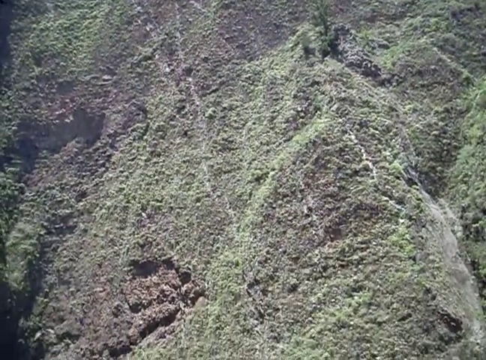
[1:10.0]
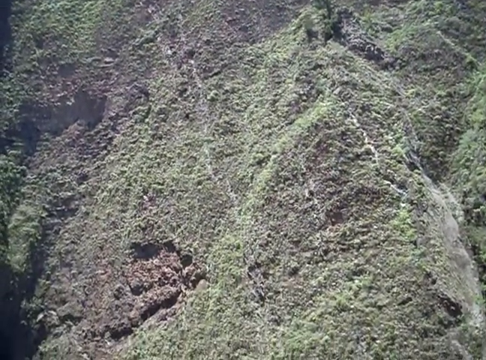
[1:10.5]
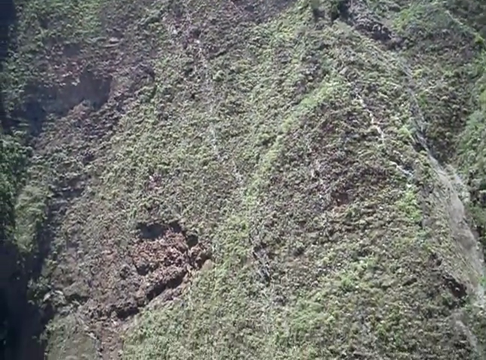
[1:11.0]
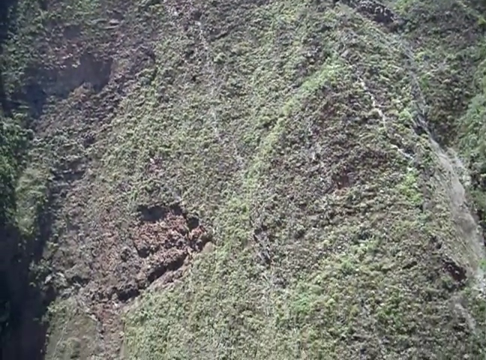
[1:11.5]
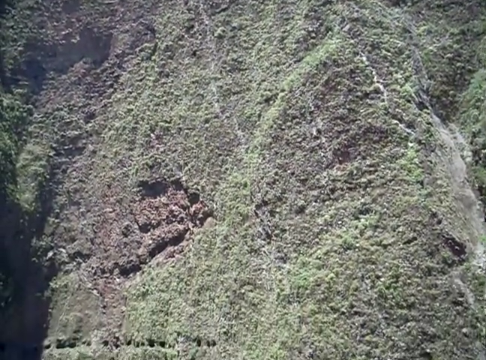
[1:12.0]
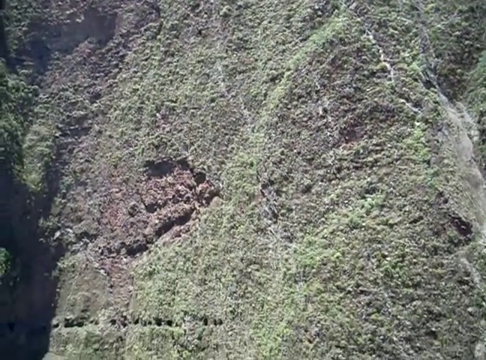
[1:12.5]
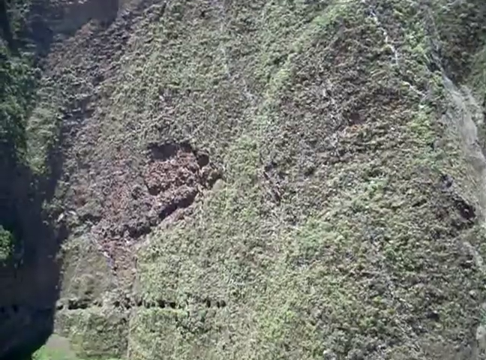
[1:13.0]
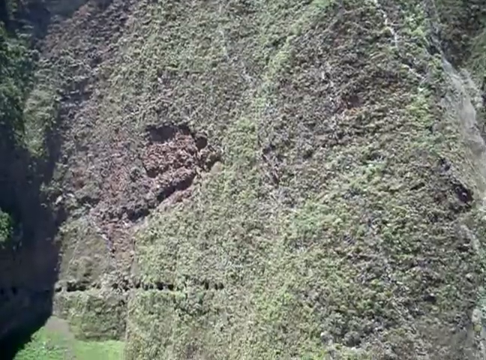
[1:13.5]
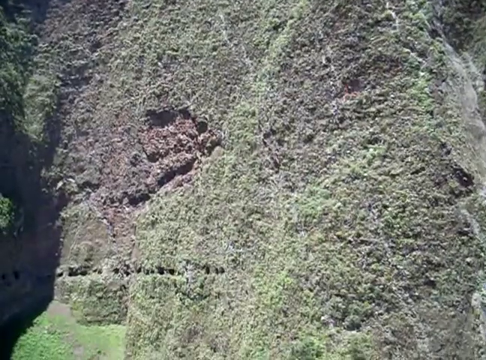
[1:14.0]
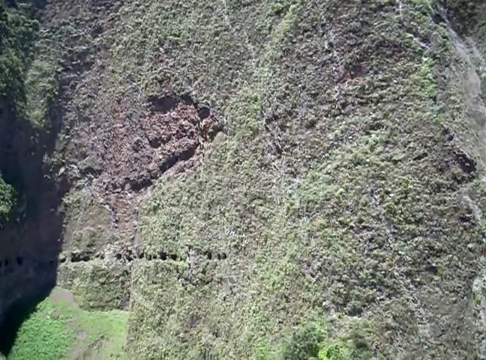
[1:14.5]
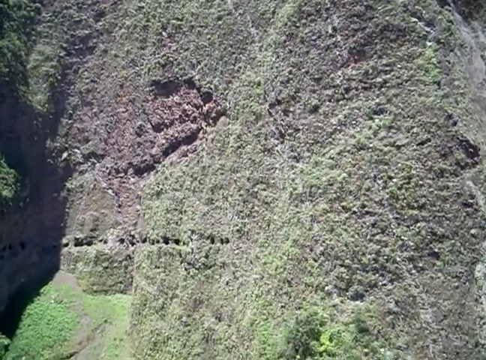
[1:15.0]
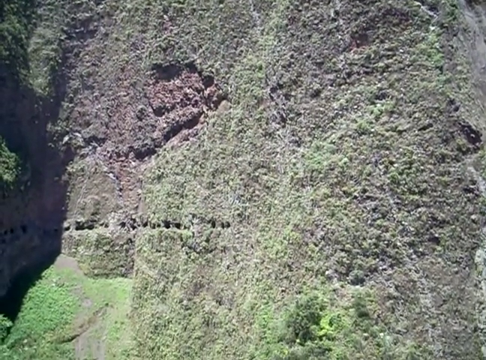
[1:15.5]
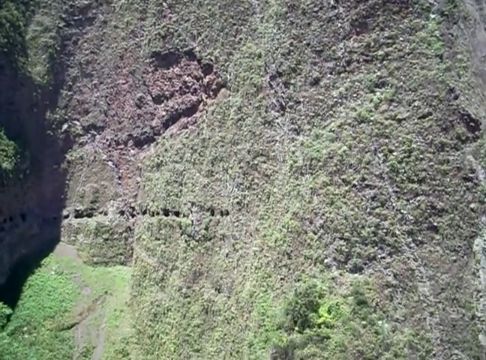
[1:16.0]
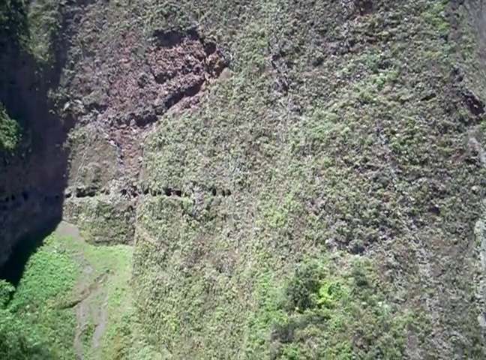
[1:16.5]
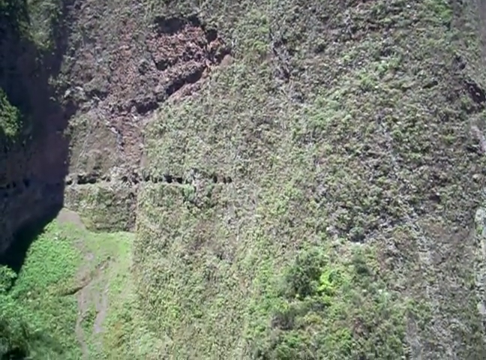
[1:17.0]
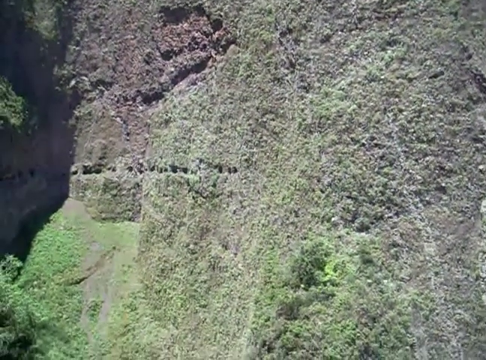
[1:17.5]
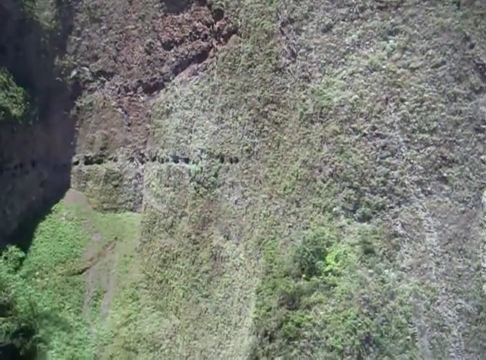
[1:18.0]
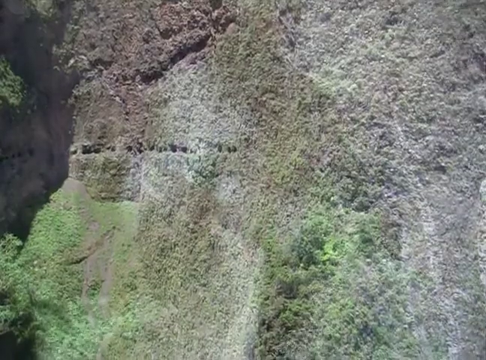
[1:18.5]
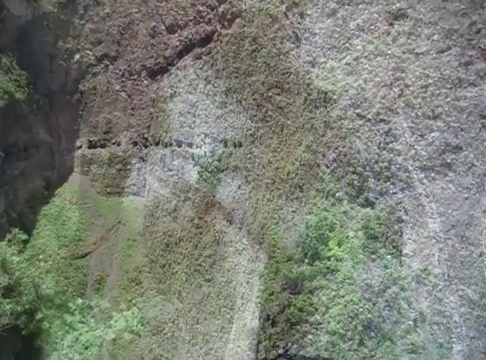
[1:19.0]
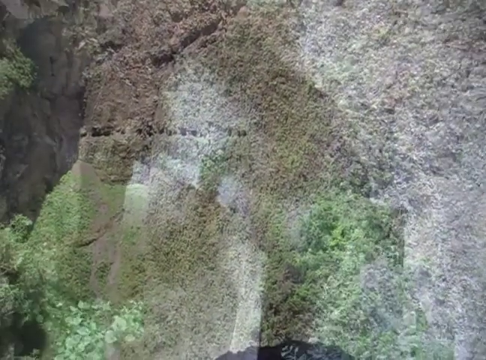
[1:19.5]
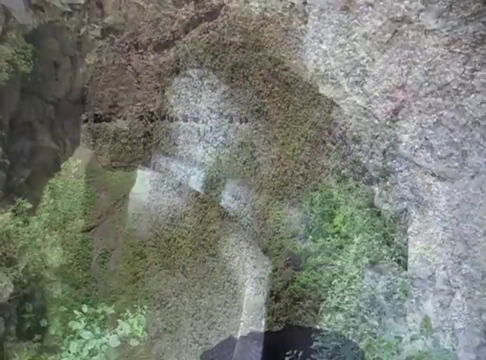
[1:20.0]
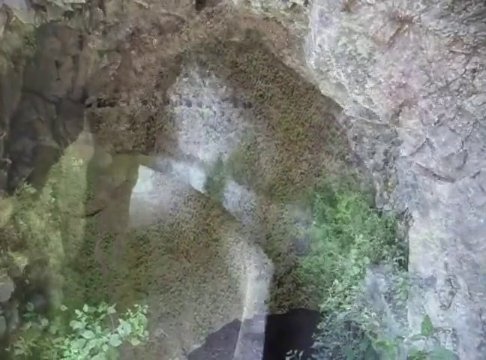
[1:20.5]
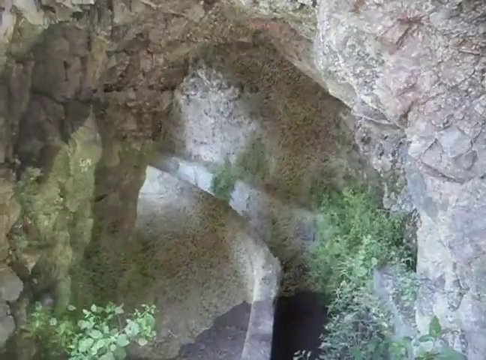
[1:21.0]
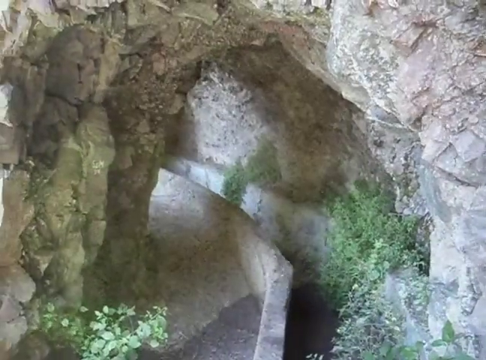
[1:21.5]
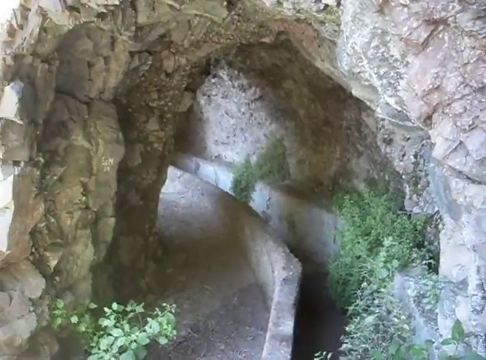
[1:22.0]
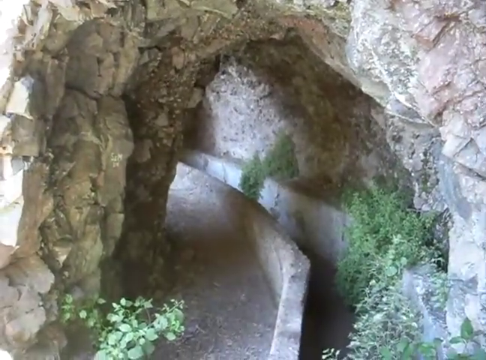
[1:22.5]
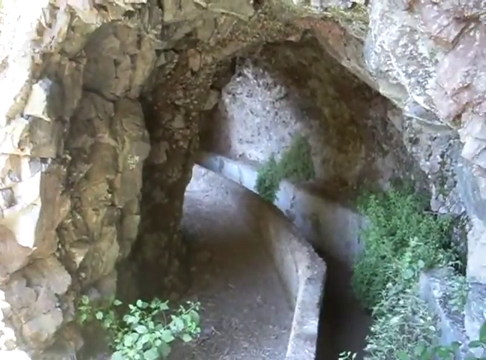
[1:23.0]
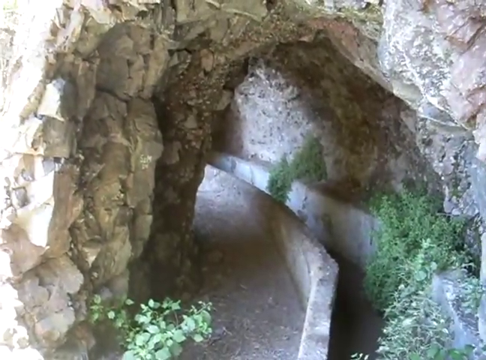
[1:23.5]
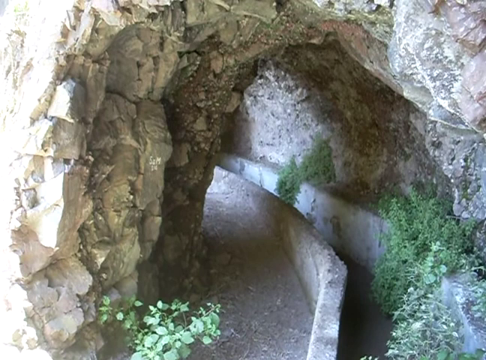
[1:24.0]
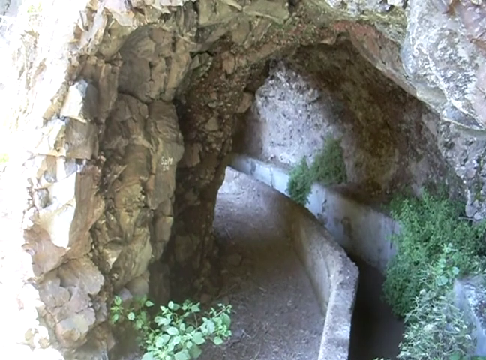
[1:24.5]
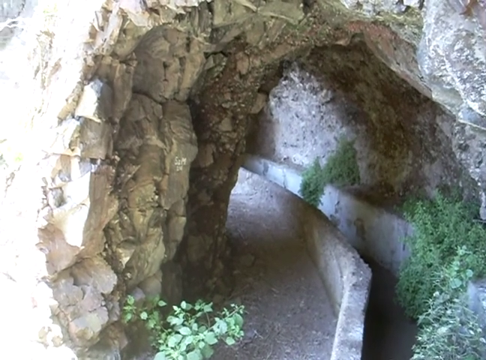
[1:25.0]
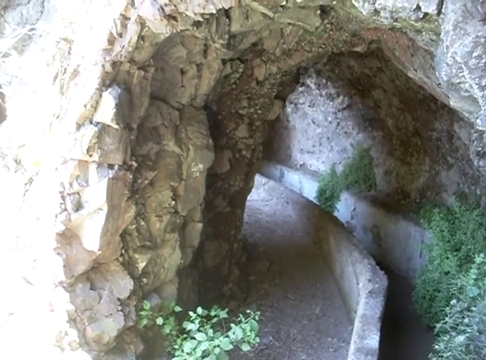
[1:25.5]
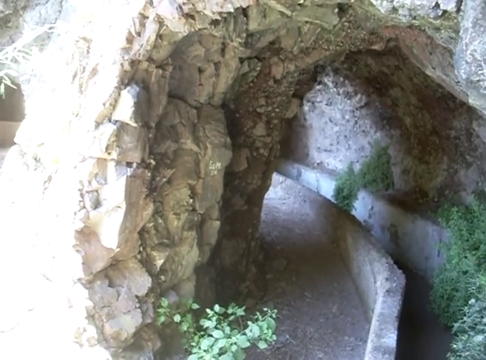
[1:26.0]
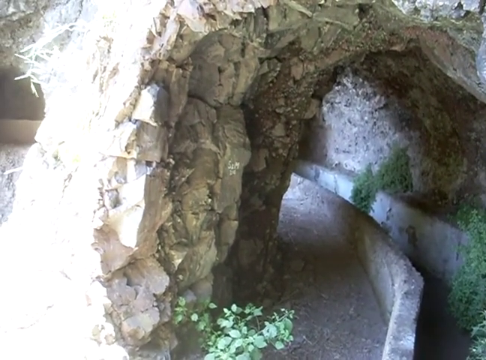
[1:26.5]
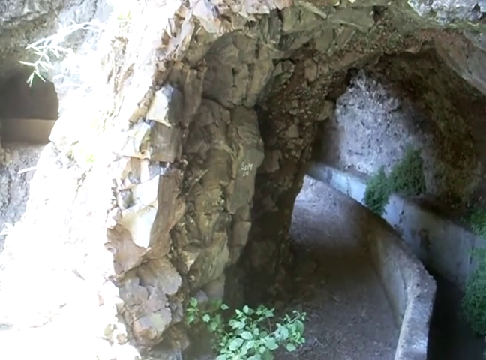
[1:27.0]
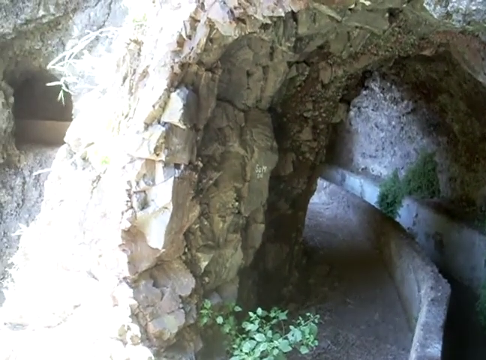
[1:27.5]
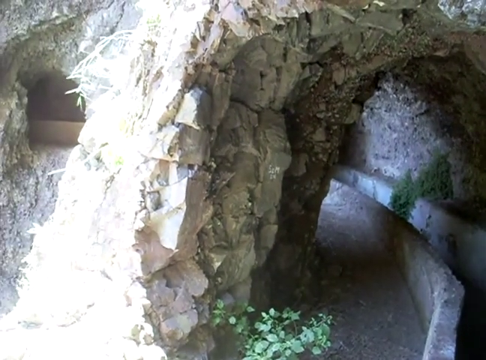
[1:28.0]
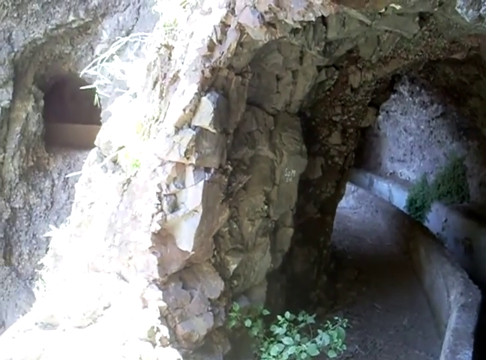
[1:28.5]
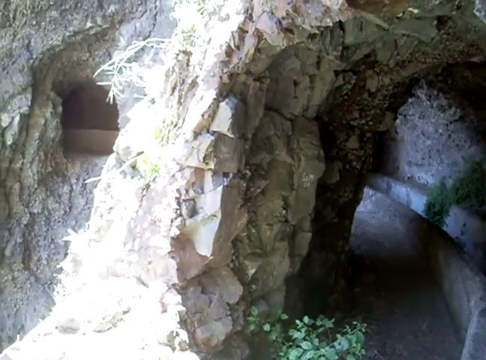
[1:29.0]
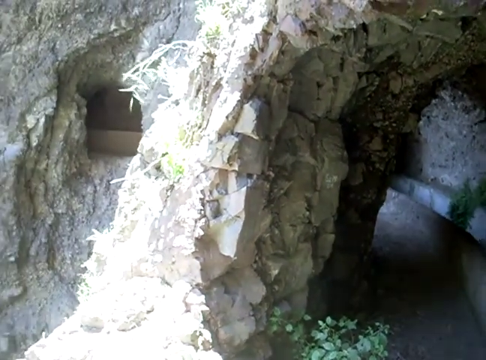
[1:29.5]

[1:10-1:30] The view looks downward to see how far down it goes, then looks back inside along the pathway that was taken, and also to the left, where there is another hole in the wall to look out through, like the holes seen on the other side. The holes appear to be pathways or openings for looking out. The pathway appears to have either a brick flooring or just the stones that are there, but there looks to be some man-made intervention because the curve is made in such detail and the surface is too smooth; this appears so for each one shown. The stones are a light color, the pathway is a light color, and there look to be two different paths.